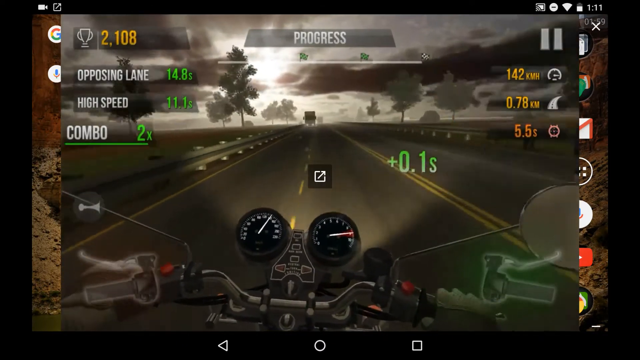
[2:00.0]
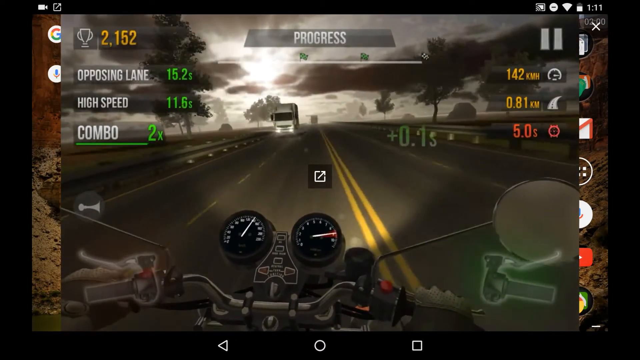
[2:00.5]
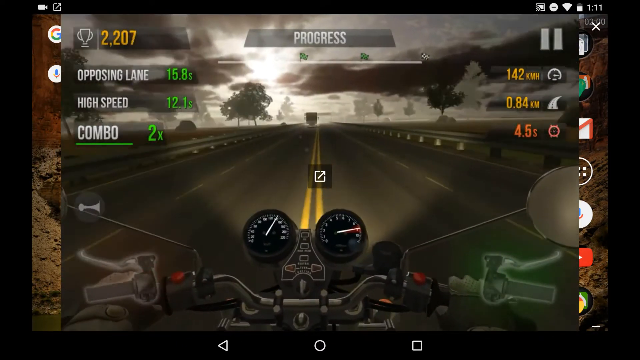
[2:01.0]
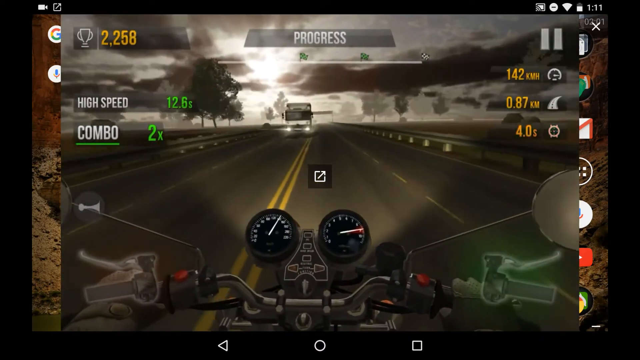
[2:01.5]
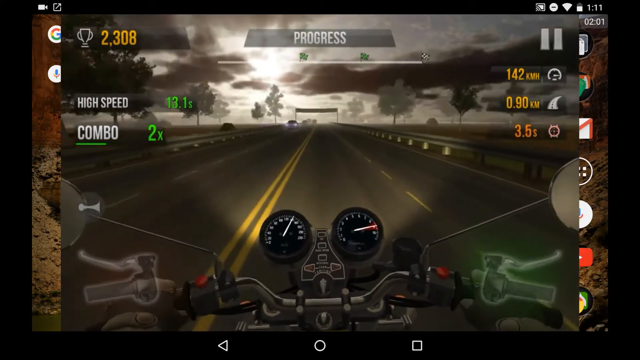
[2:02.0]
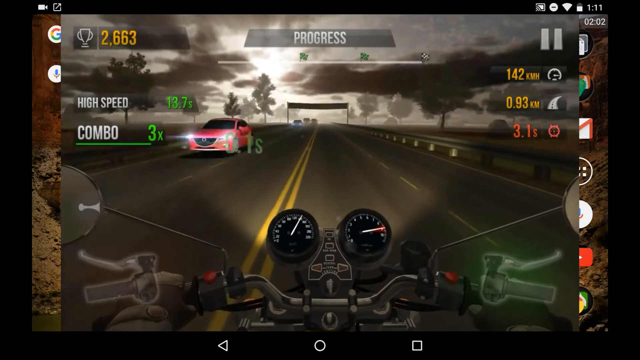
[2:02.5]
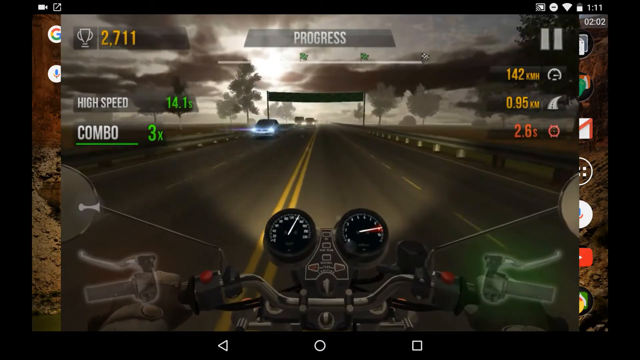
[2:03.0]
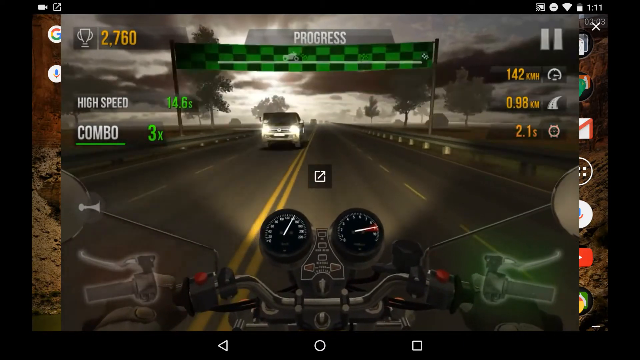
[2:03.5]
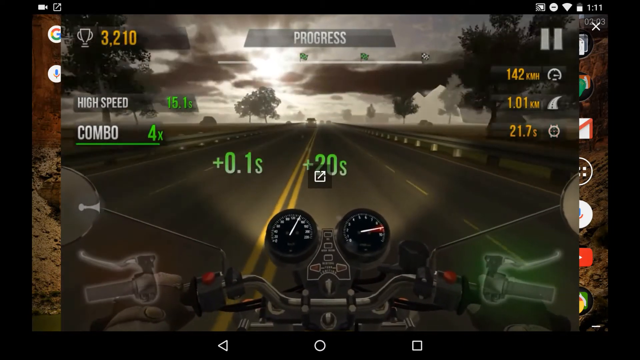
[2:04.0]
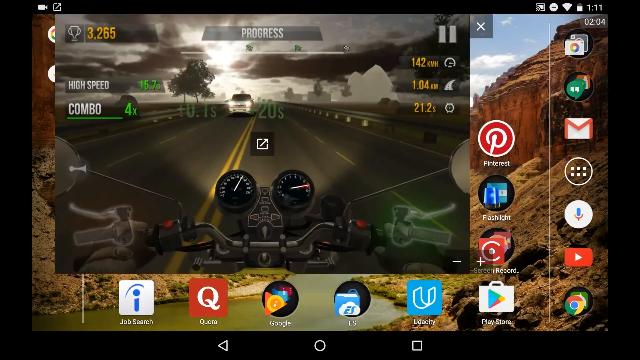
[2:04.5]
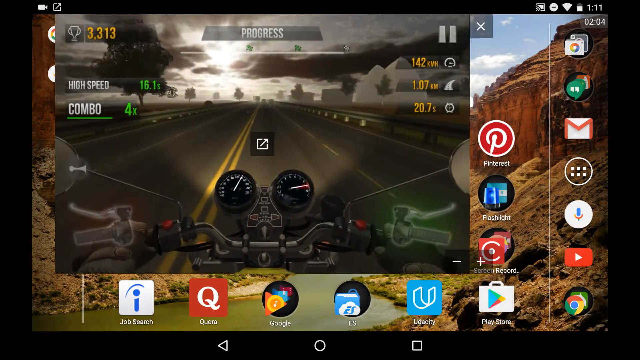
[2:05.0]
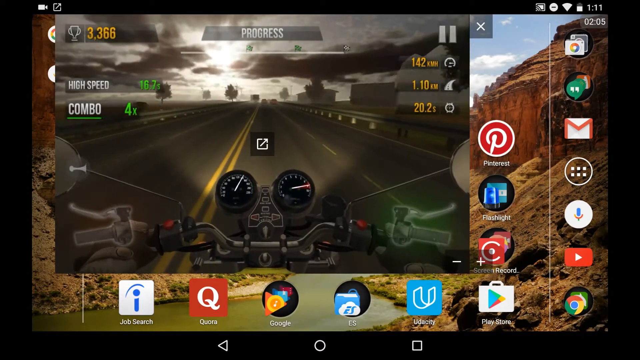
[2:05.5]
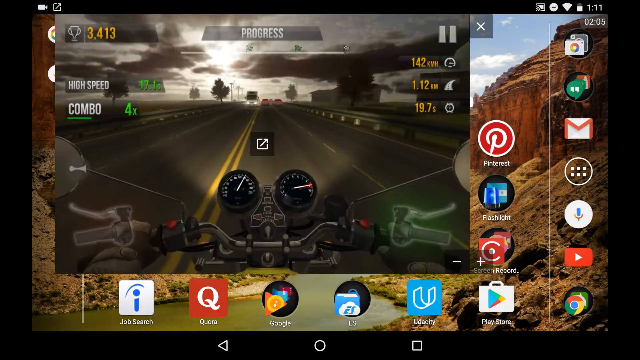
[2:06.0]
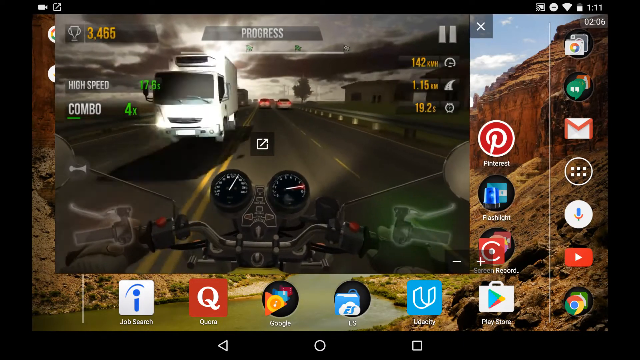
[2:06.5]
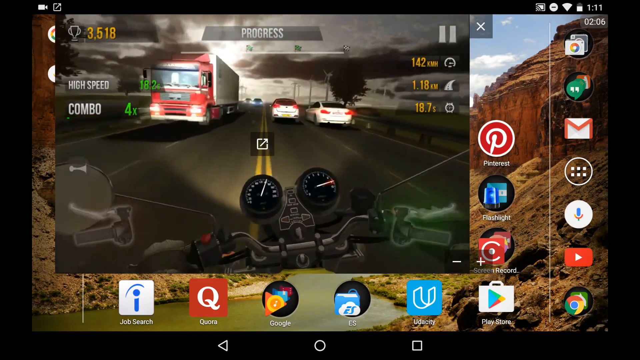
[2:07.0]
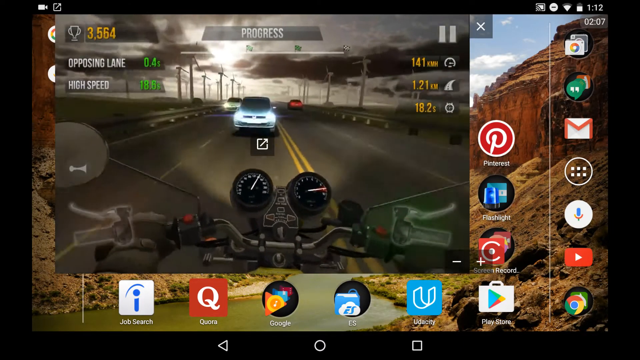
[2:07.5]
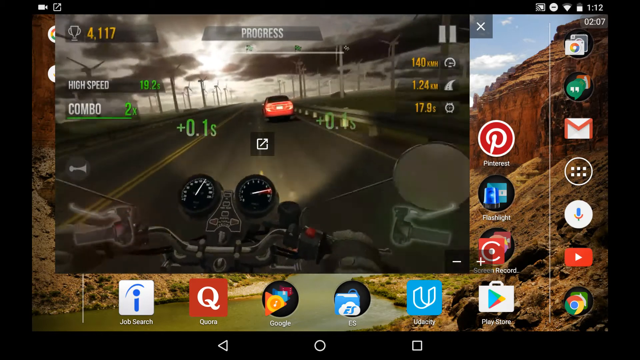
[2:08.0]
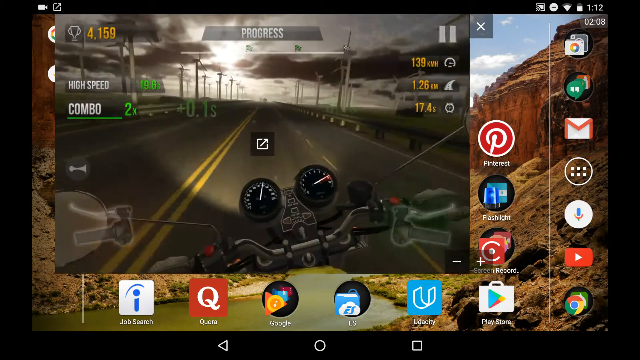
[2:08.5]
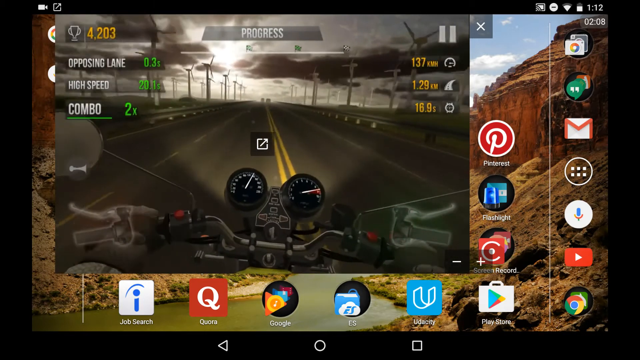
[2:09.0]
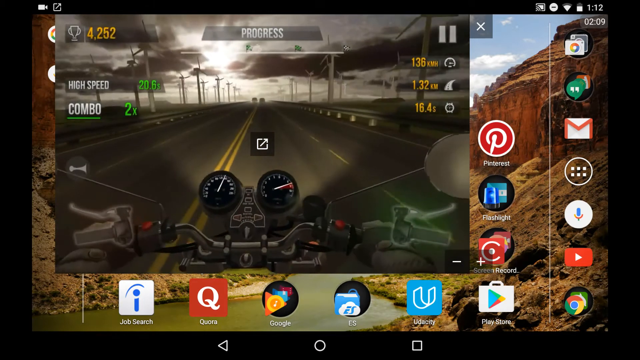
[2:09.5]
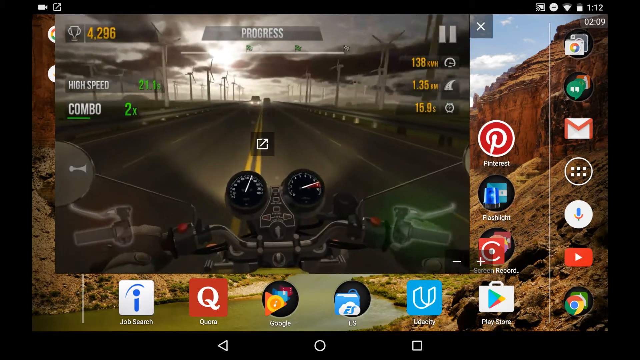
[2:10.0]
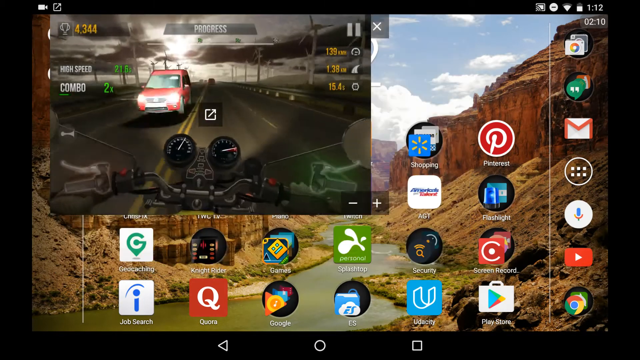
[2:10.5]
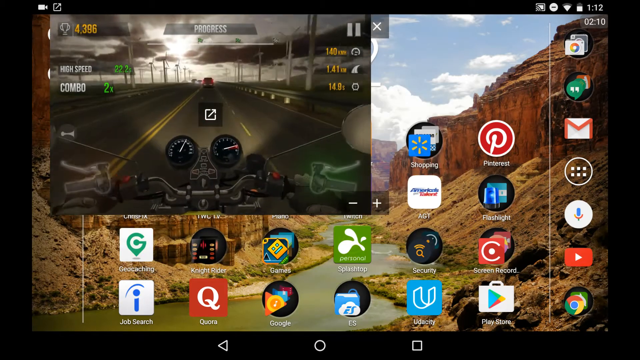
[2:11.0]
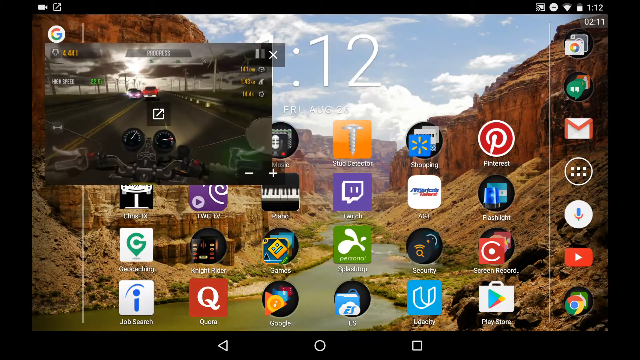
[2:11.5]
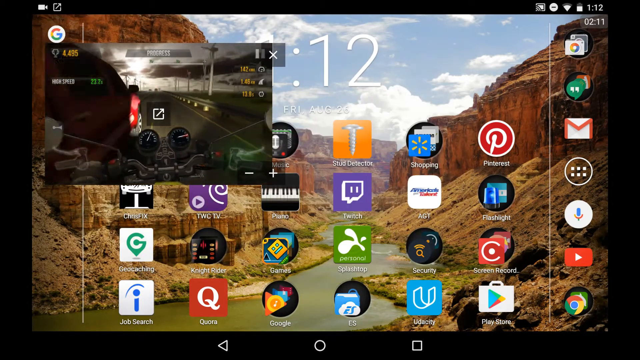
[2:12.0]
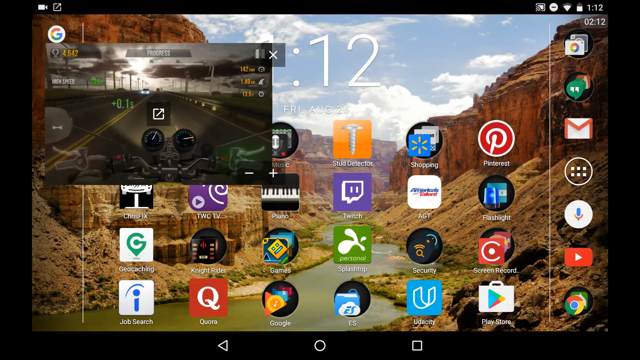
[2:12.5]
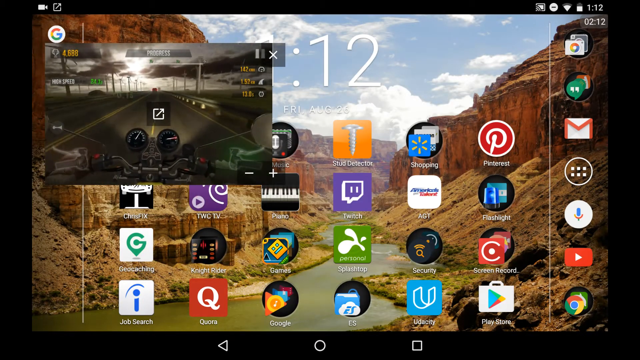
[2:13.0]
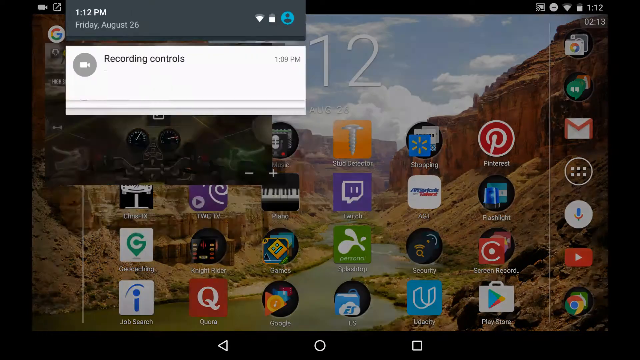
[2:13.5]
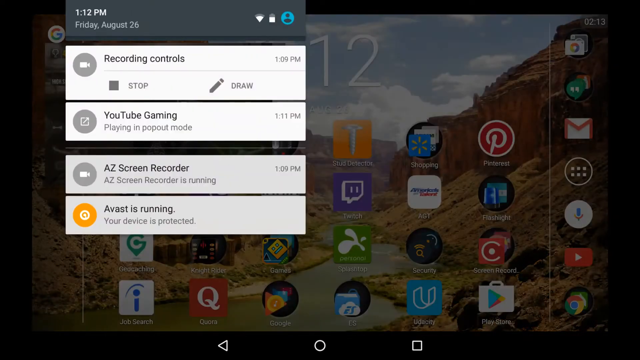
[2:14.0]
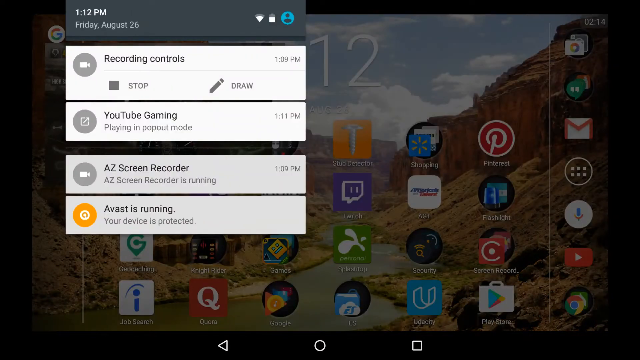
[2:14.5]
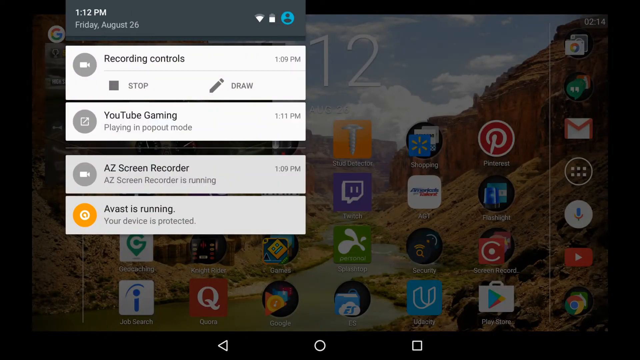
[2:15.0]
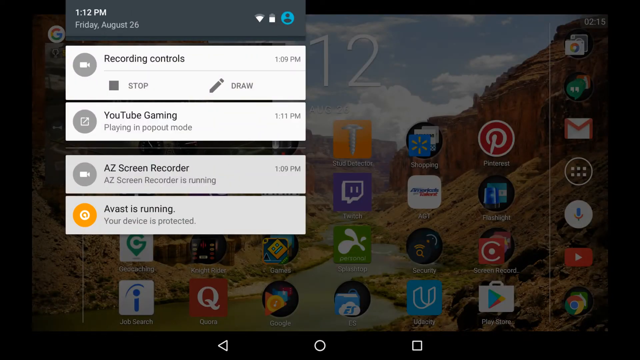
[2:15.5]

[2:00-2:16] The view is behind the handlebars of the motorcycle, in a first-person point of view. The Traffic Rider app is now at full screen size, and the user crosses back onto the correct side of the yellow line, with oncoming traffic still moving past just on the other side of the line. The user continues traveling at a high rate of speed. Each side of the road has two lanes, and the user rides in the middle lane of the right-hand side. The user narrowly avoids a semi truck on his left, with two parked sedans approaching on the same side of the road. He jumps over the yellow line to avoid the parked sedans, nearly running into an oncoming white SUV, swerves to his right before hitting the SUV, and almost collides with the back of a red sedan. He narrowly moves to his left to avoid it and continues along the highway. The user then minimizes the Traffic Rider screen, first to about 50%, then to about 25%, placing it in the top left-hand side of the desktop screen.